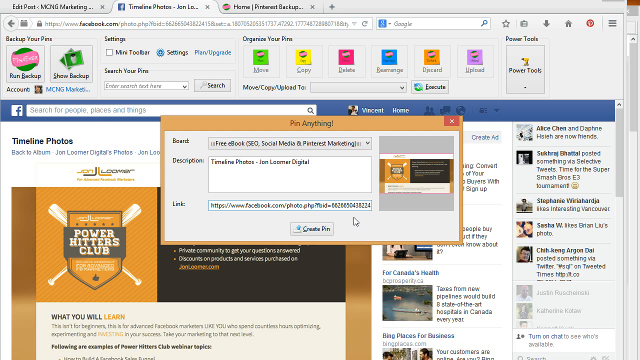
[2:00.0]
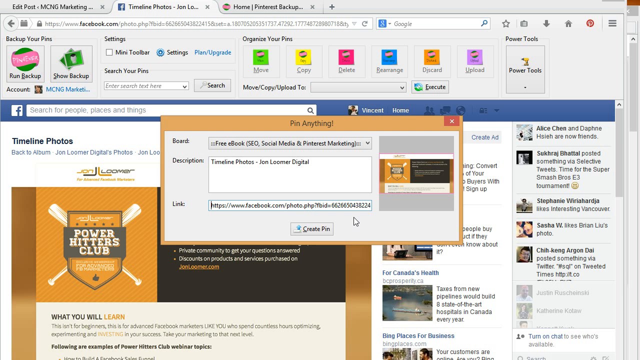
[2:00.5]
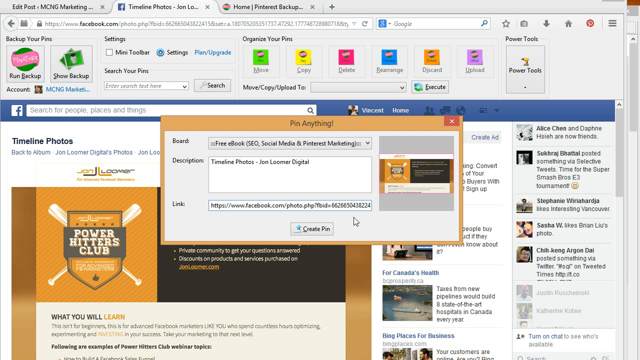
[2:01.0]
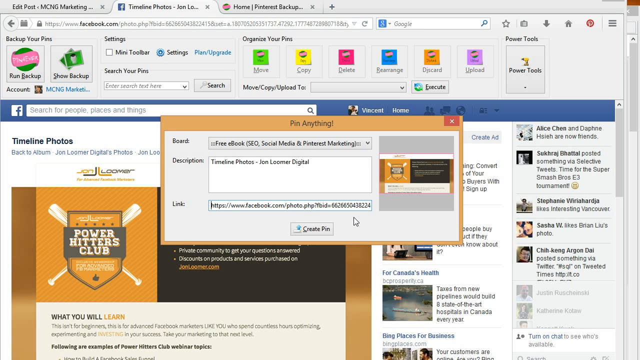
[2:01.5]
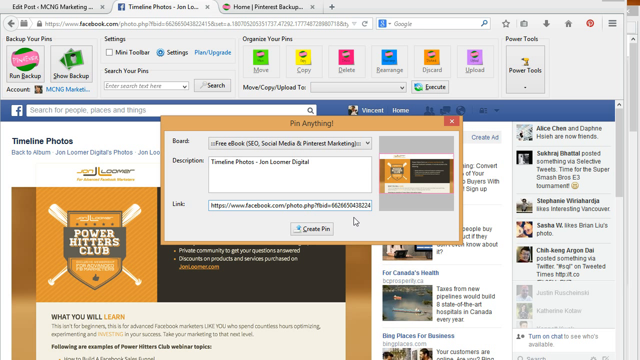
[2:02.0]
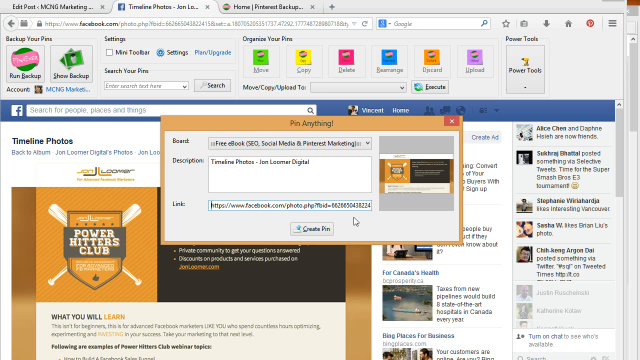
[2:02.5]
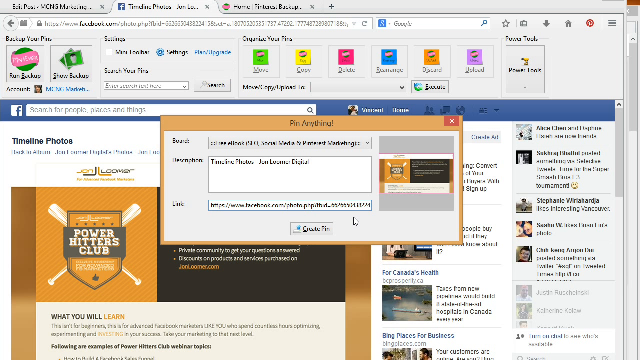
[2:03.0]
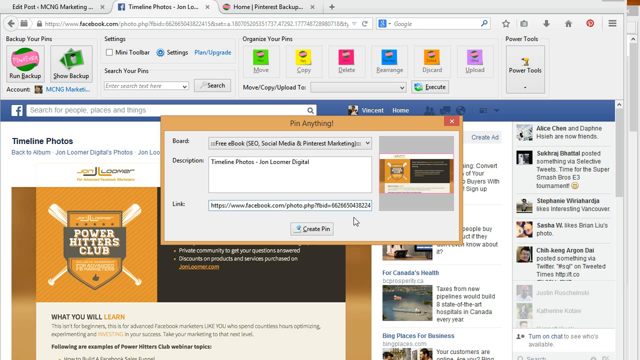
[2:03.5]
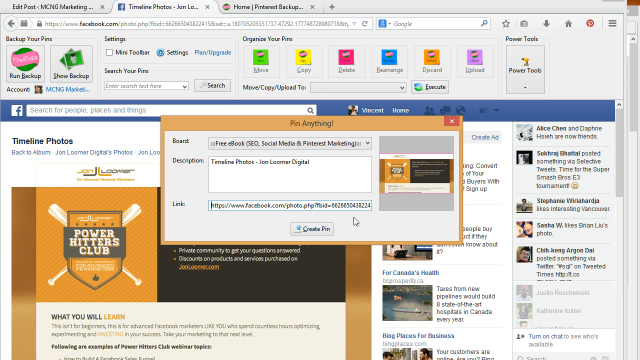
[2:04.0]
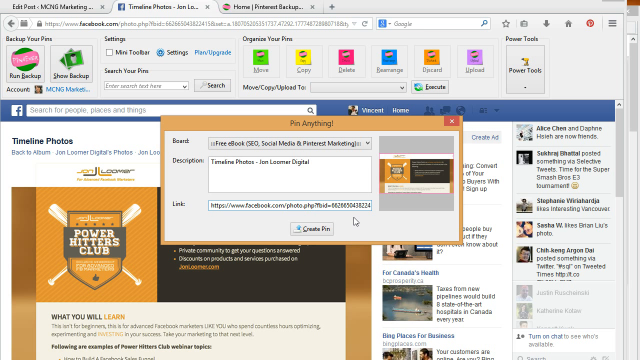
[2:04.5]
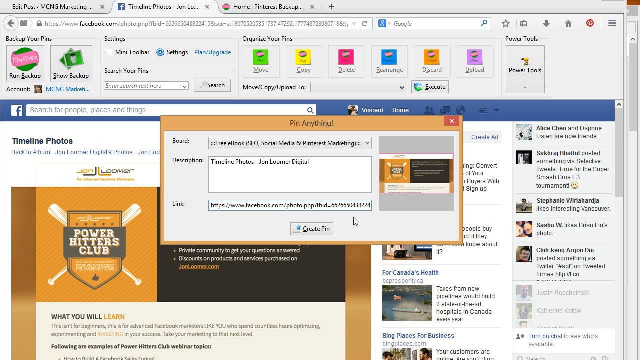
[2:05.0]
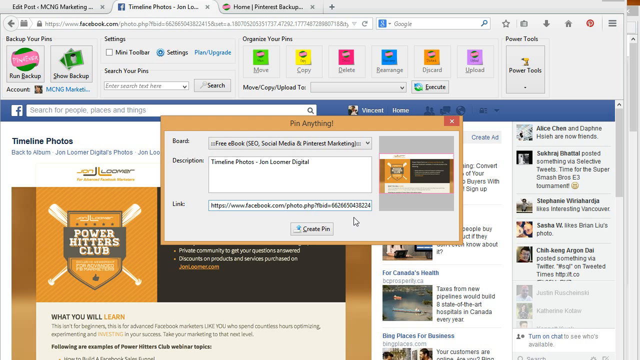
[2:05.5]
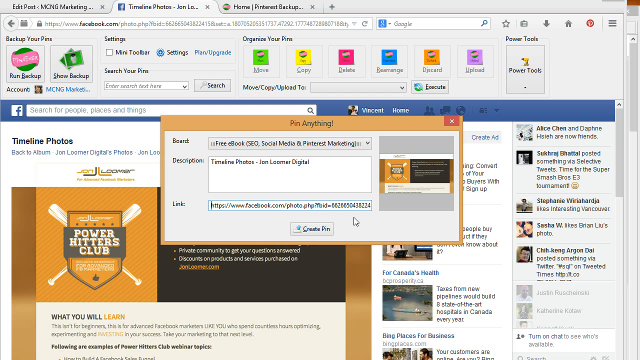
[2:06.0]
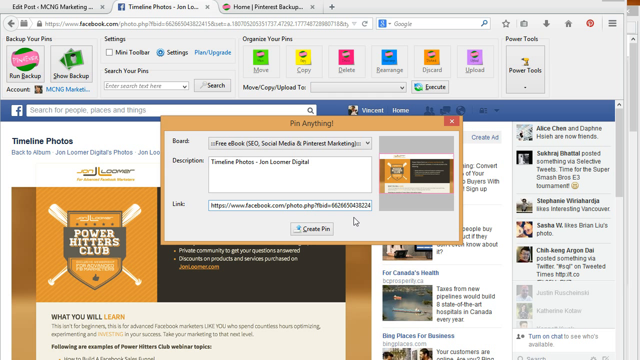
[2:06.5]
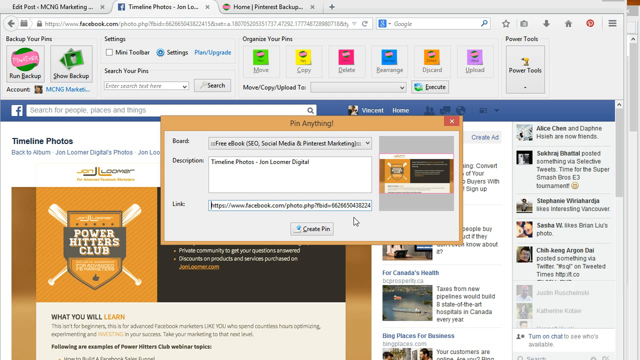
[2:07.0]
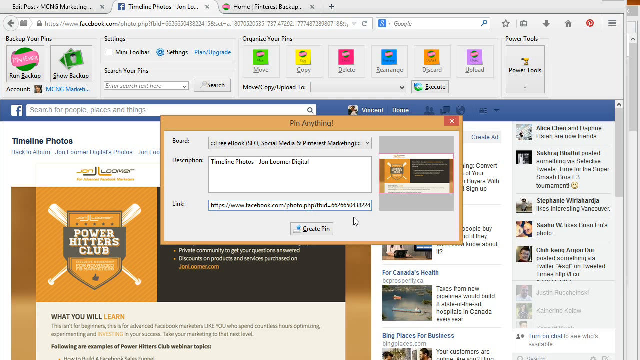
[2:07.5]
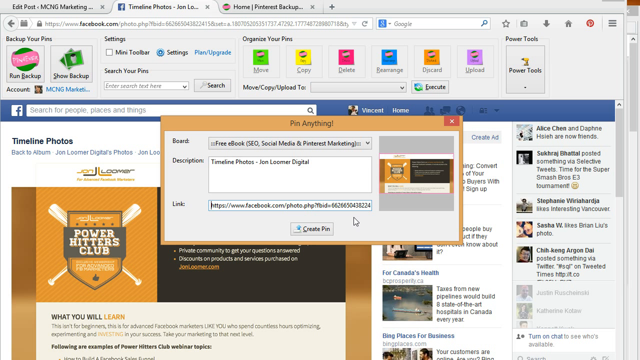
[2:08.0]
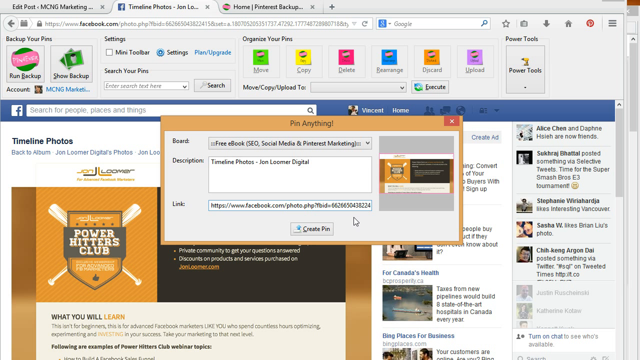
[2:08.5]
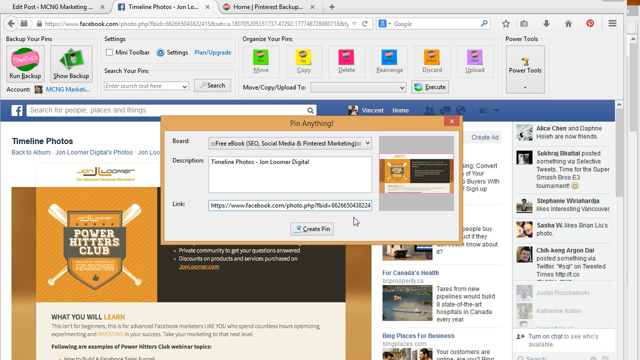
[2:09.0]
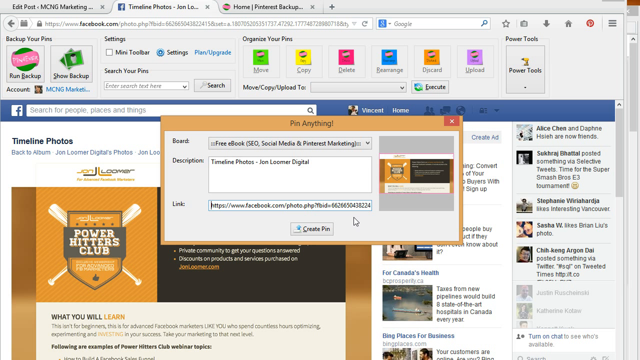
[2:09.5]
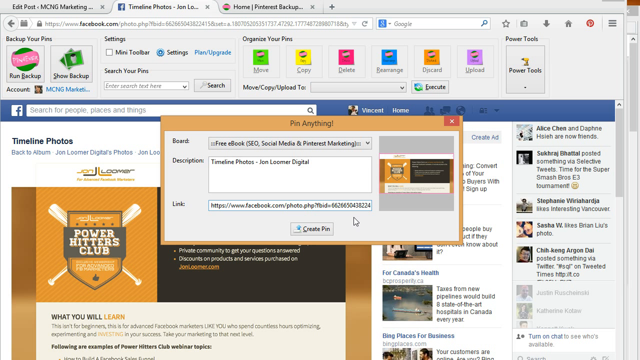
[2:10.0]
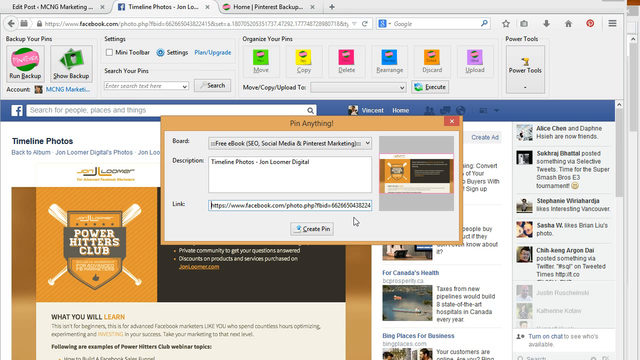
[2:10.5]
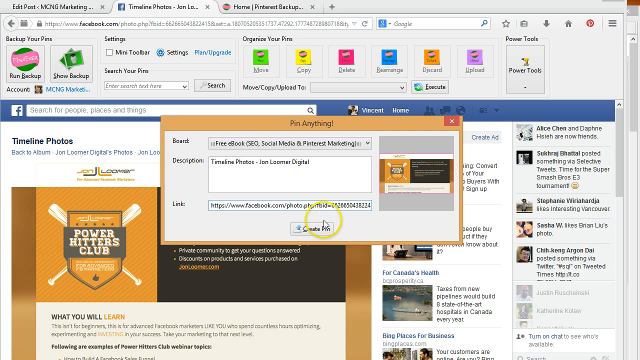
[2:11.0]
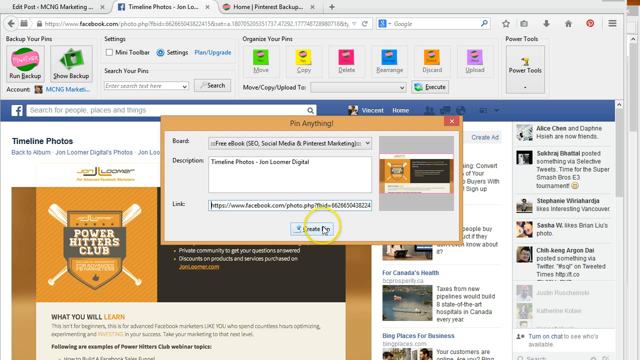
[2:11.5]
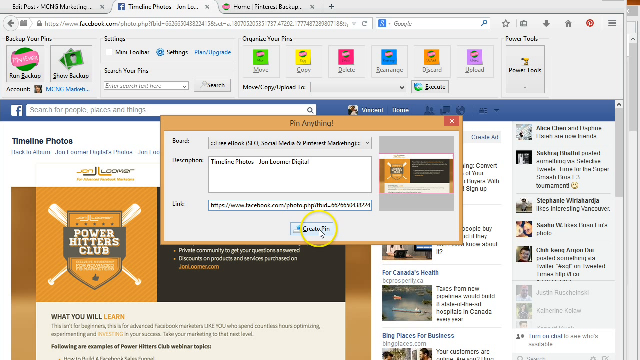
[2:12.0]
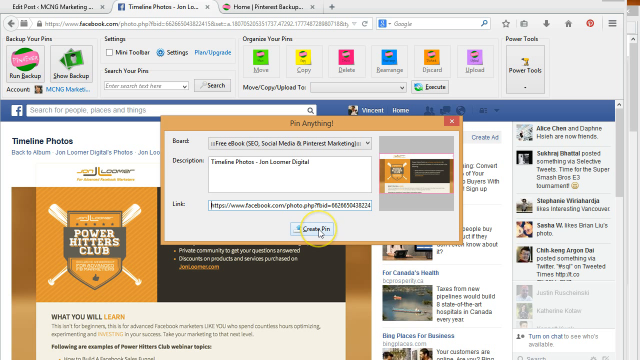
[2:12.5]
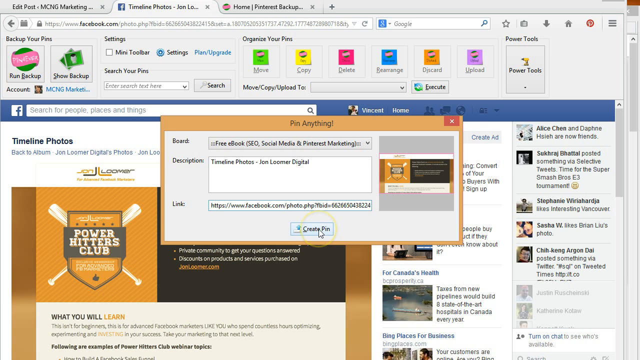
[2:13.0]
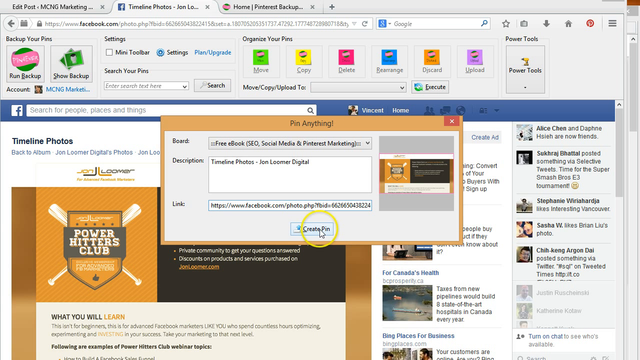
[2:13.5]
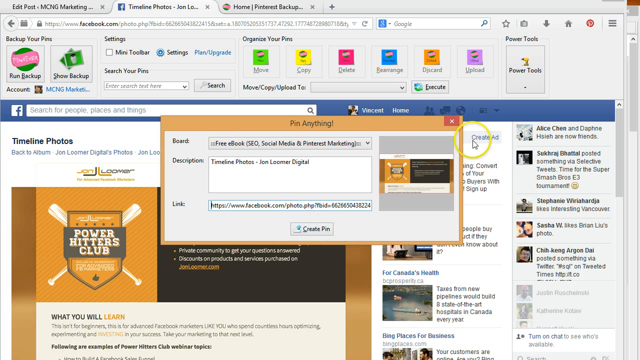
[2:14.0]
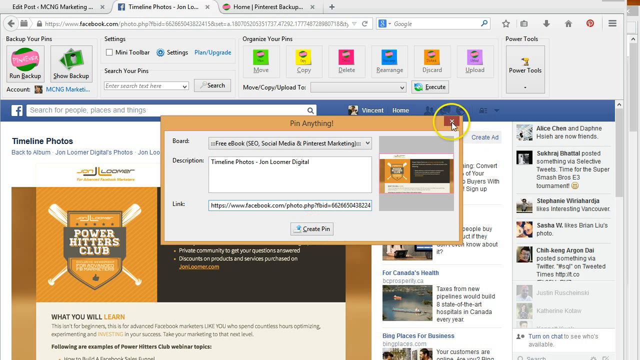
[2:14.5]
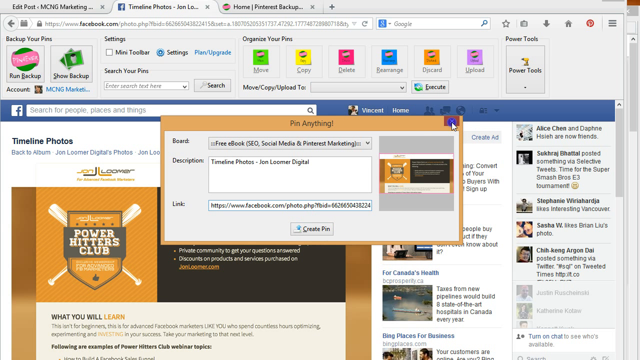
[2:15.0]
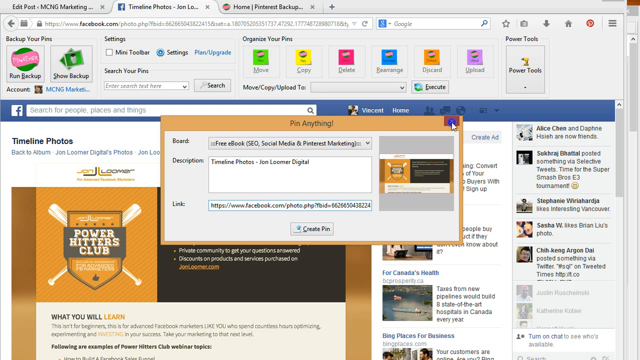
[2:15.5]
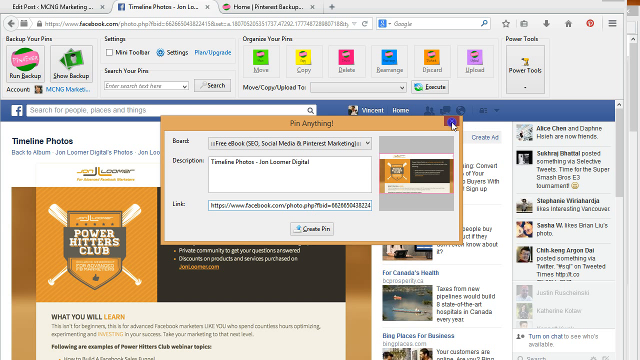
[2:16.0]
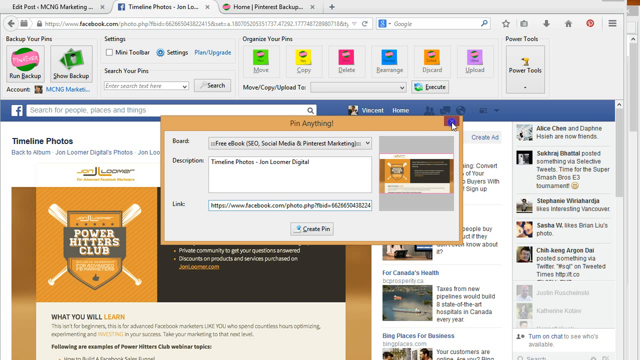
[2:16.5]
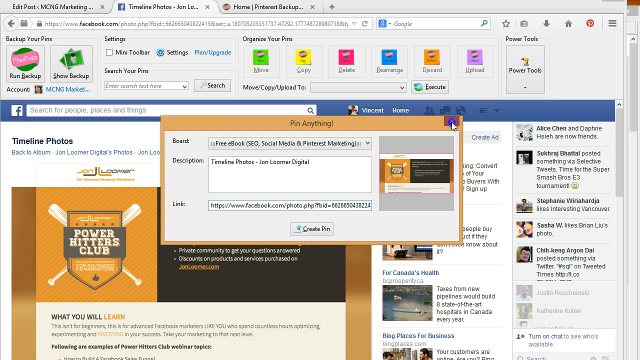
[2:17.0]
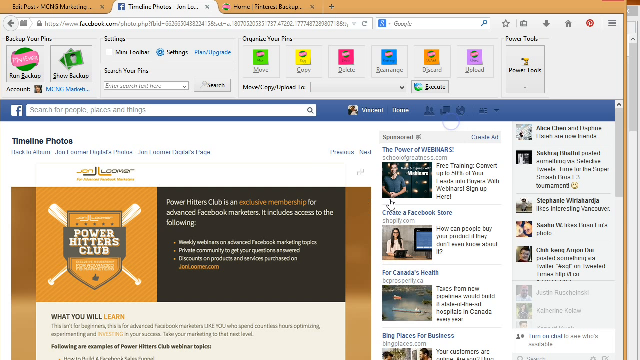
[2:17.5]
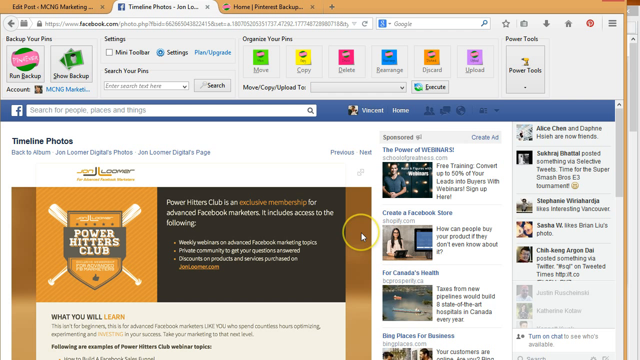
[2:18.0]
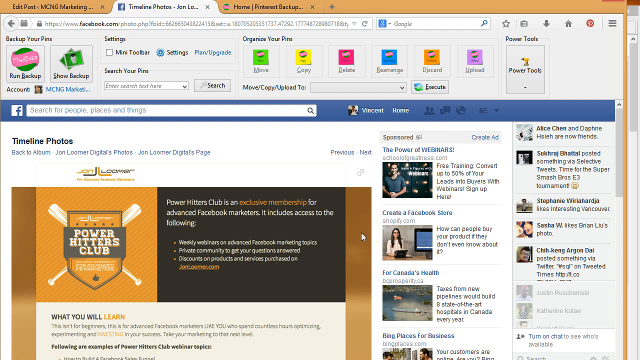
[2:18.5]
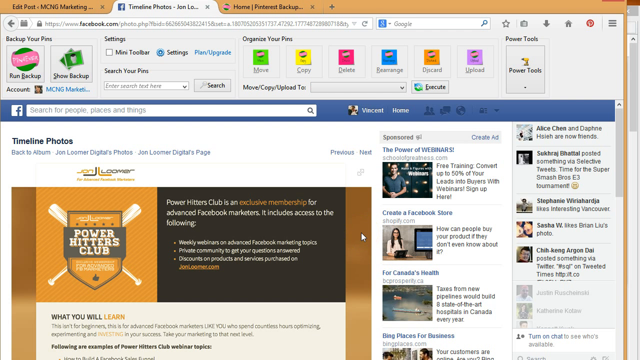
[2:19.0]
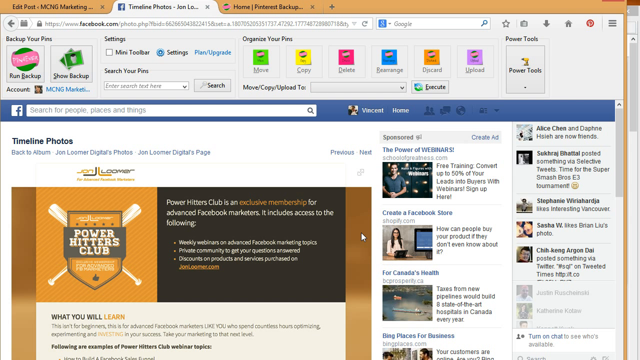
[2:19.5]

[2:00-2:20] A computer page has a pop-up in the middle reading "pin anything". Information has been typed into the top, a description reading "timeline photos, John Loomer Digital", and a link is clicked. The pop-up appears again with "create pin" underneath all the information. A picture of the Power Hitters Club website appears. The white cursor, marked by a yellow circle, moves around inside the pop-up, appears to stop, and then hits create pin. The pin anything pop-up appears again, repeating the sequence. The top of the page reads "Back up your pins, settings and organize your pins".